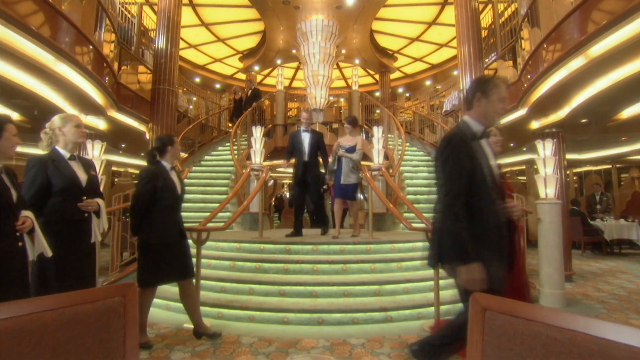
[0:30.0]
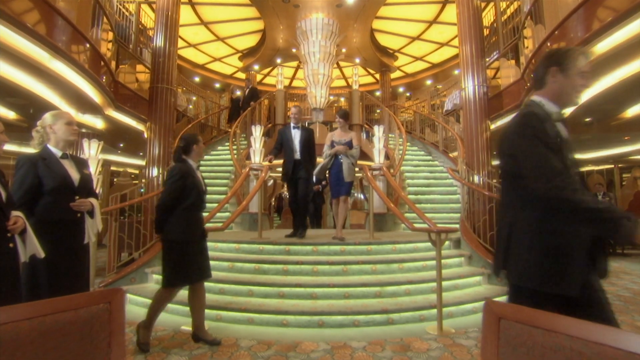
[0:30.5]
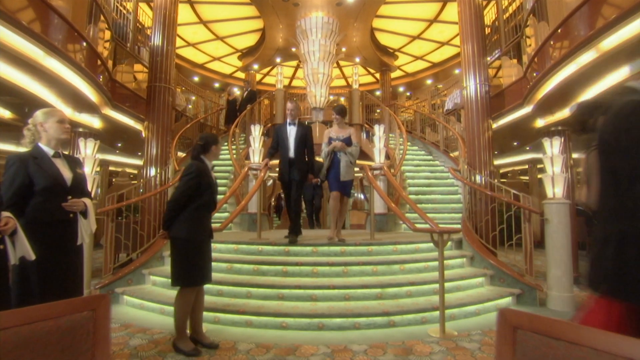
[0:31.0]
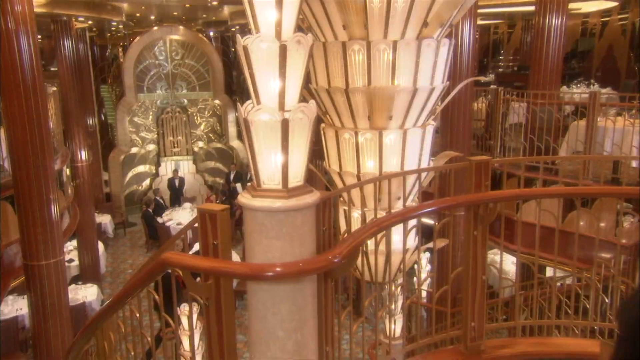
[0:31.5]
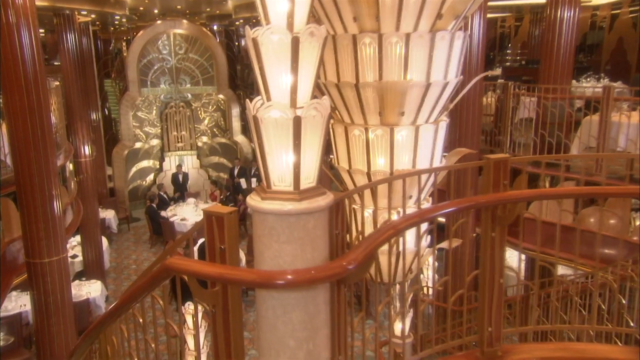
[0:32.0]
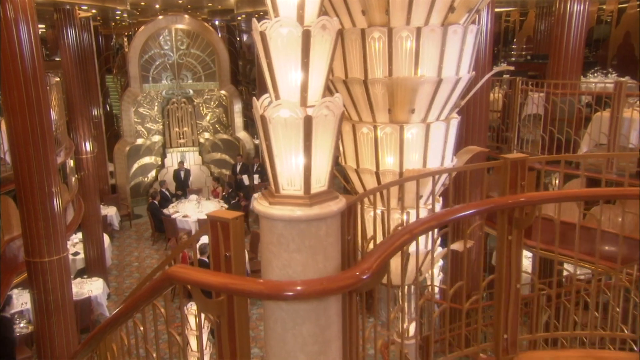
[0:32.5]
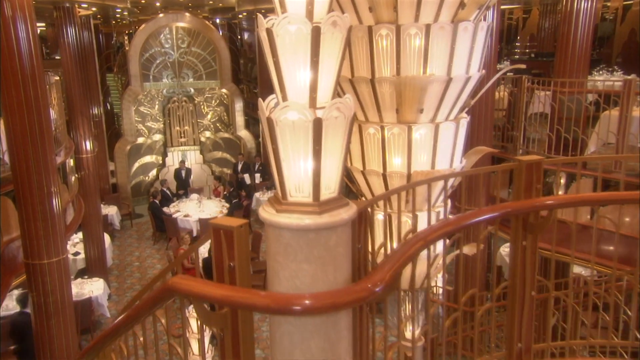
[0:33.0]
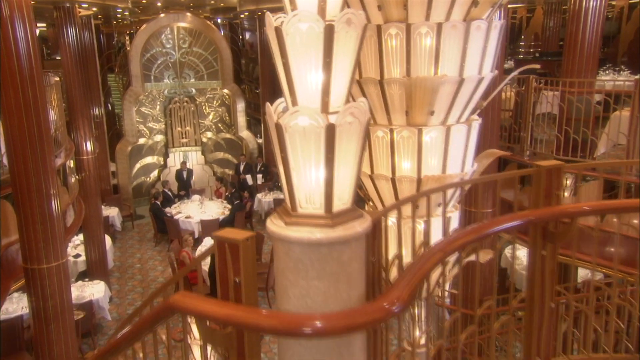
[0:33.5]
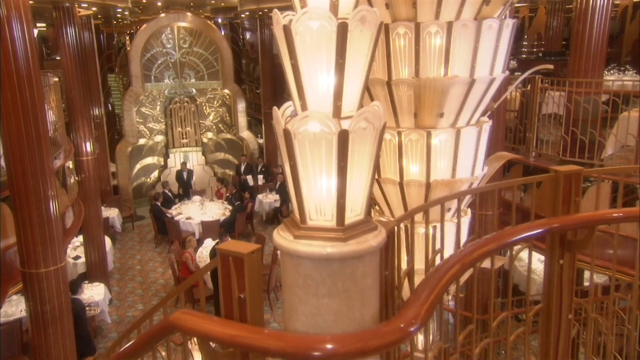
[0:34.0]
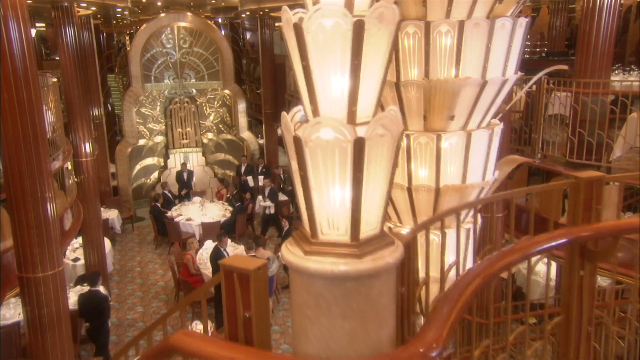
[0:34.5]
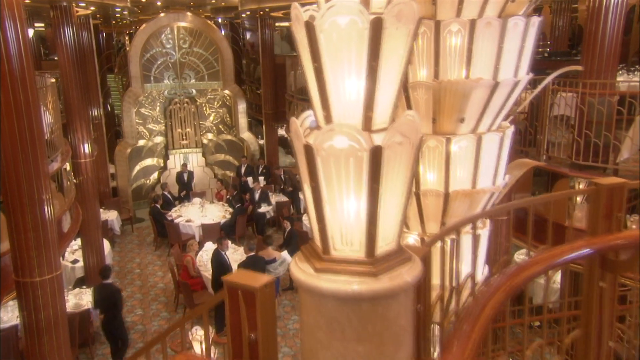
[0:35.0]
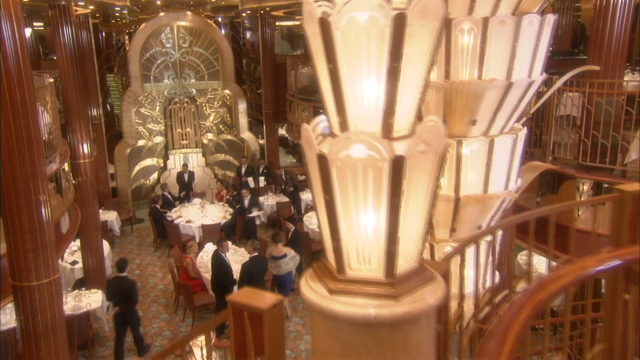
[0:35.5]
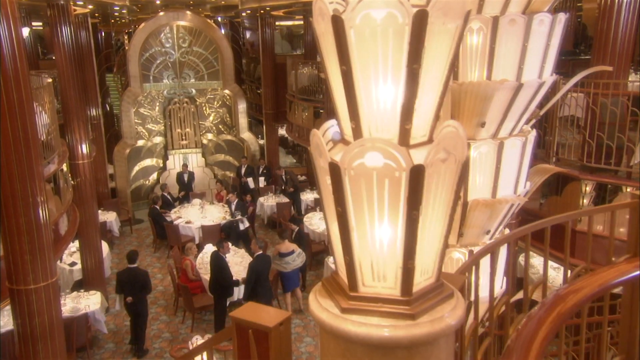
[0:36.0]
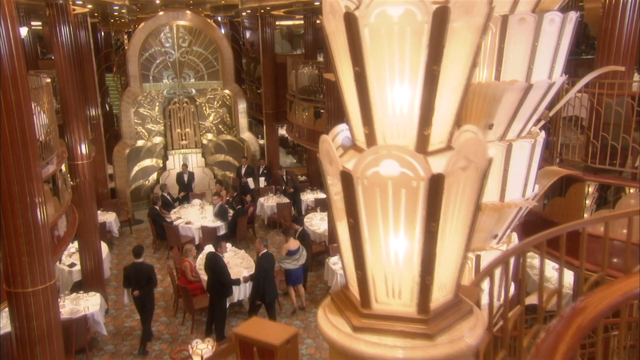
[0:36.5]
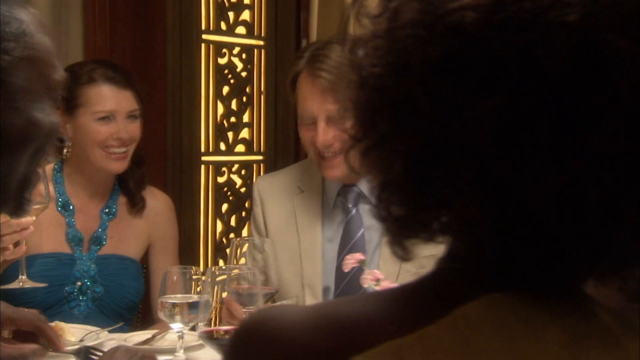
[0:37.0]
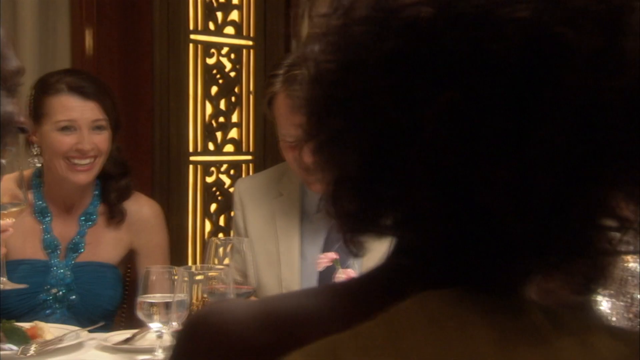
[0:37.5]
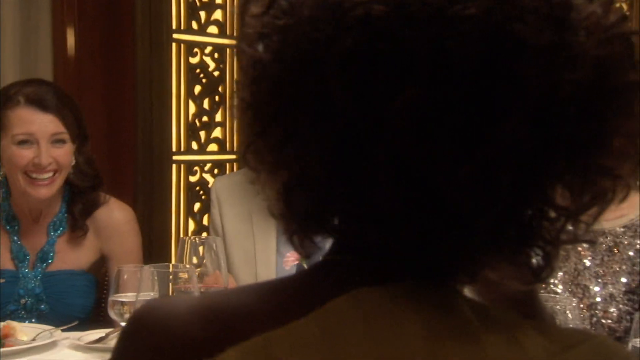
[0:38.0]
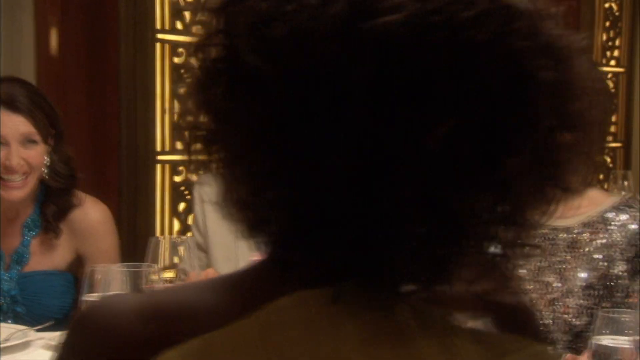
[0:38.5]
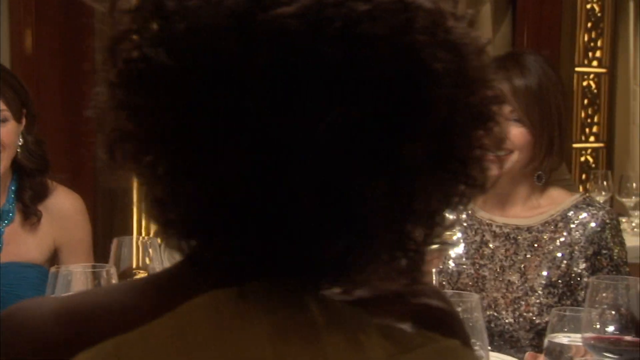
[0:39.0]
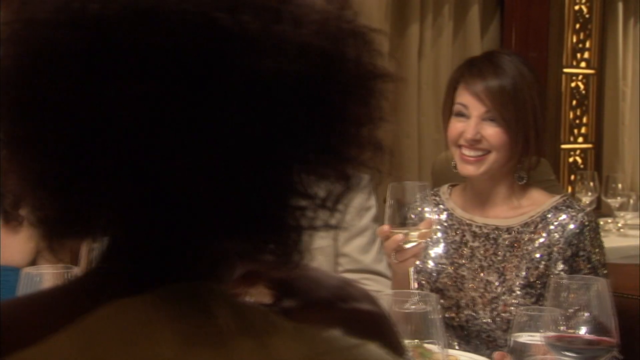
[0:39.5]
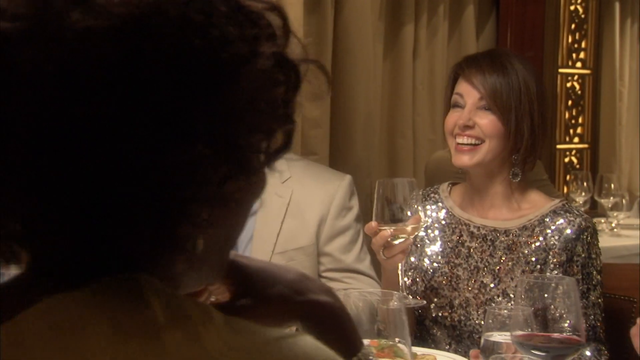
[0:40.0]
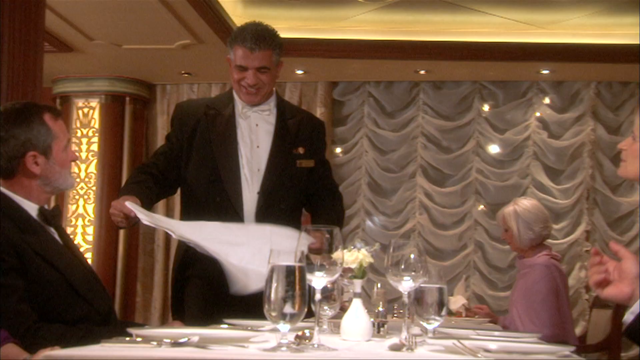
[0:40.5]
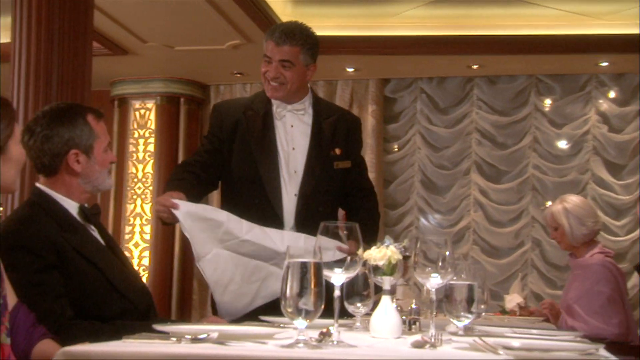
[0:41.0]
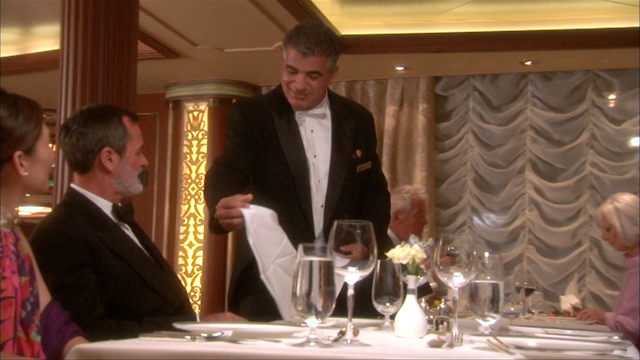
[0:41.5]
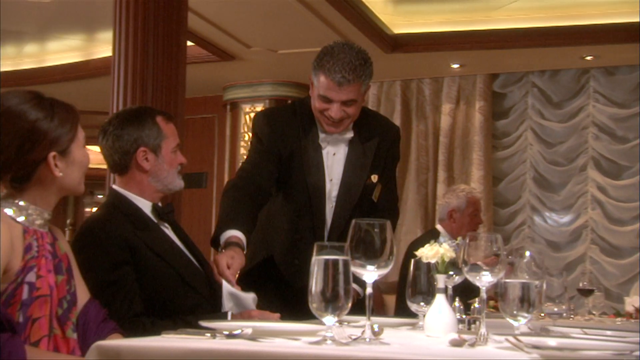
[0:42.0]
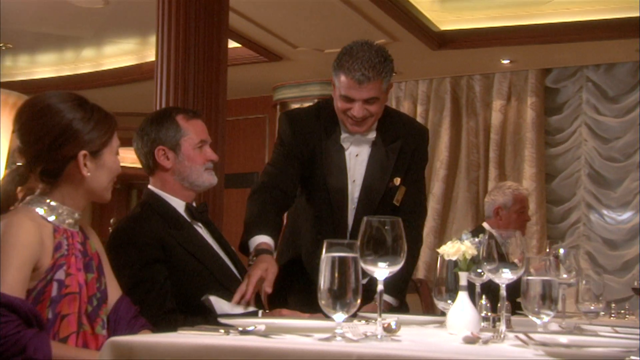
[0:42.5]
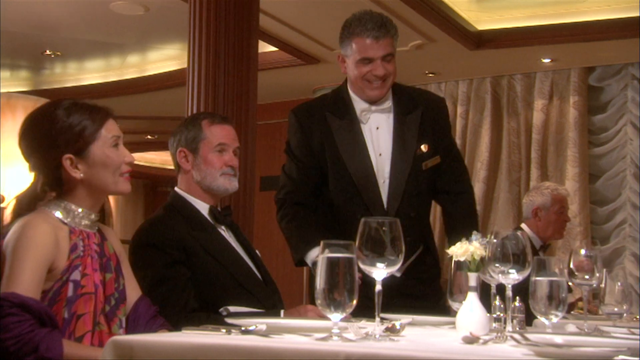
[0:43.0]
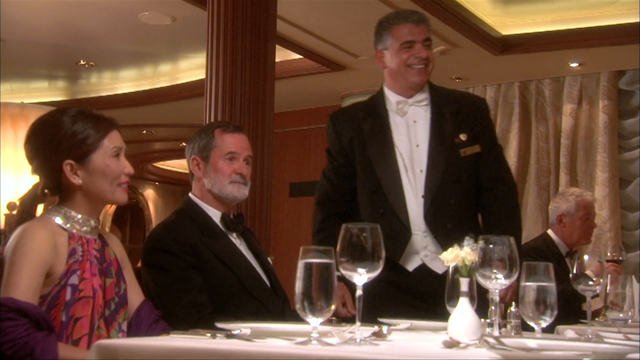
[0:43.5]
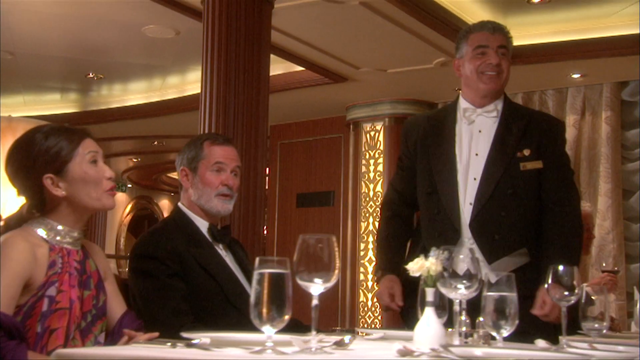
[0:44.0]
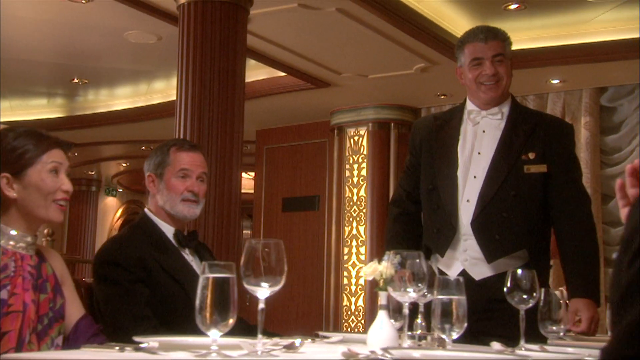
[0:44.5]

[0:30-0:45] Formally dressed people come down green steps in the middle of the shot inside the cruise ship. The view changes to a very formal, very ornate dining room, mostly brown and white, with large white lights near the front of the shot. Then a group of formally dressed diners sits around a table with white tablecloths: three couples, each a man and a woman, with a male server. The women wear formal dresses in blue, silver and, in the third couple, mostly pink; the men wear tuxes. They sip various drinks, mostly white-colored wine. The server stands at the head of the table, places a napkin over a gentleman's lap and smiles at the diners. In the background there is another table with a gray-haired gentleman.